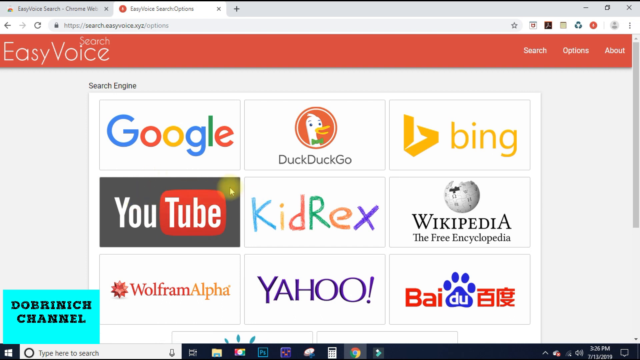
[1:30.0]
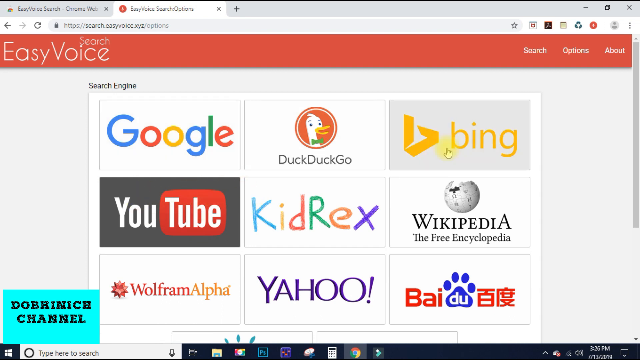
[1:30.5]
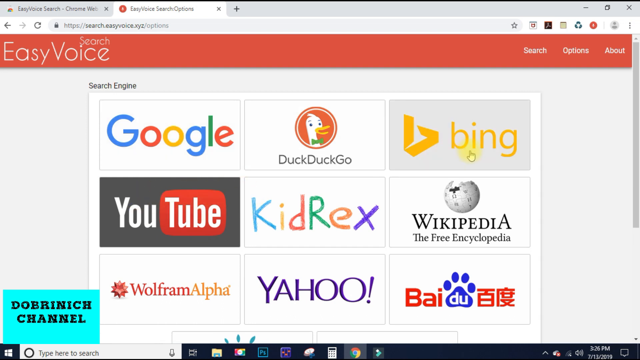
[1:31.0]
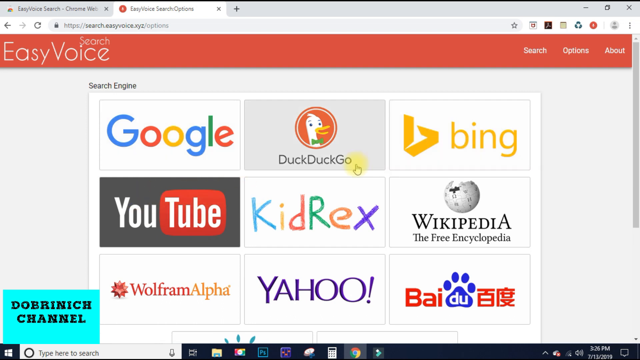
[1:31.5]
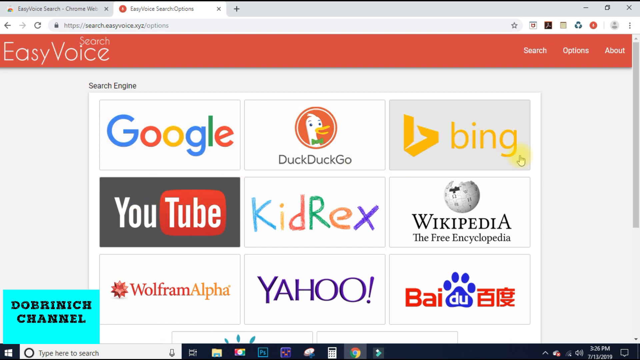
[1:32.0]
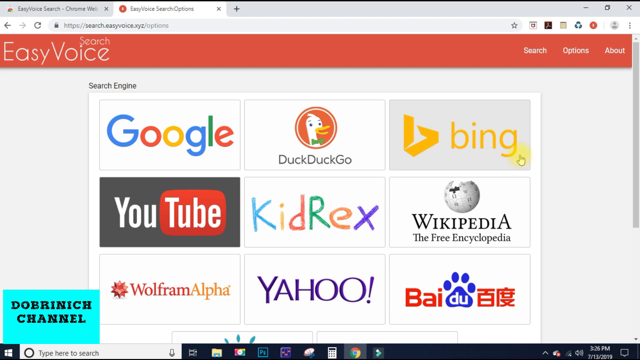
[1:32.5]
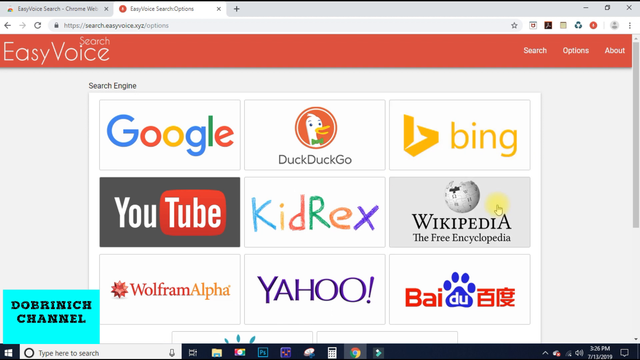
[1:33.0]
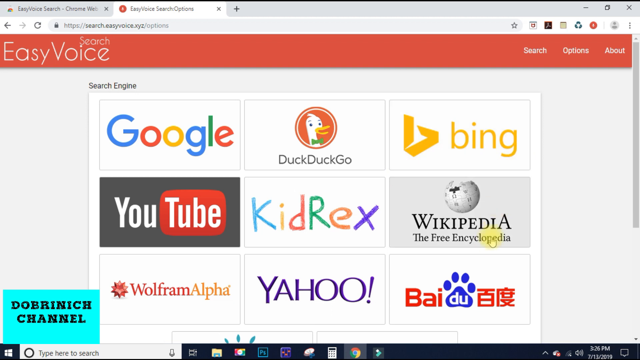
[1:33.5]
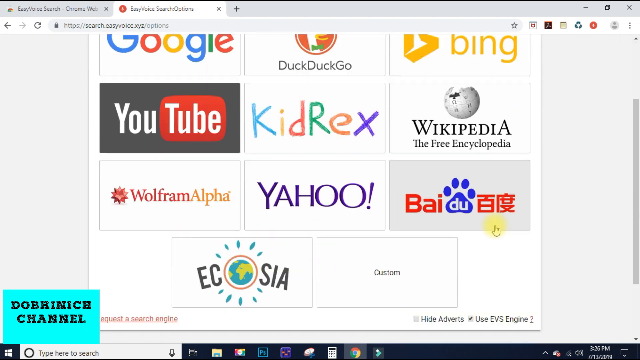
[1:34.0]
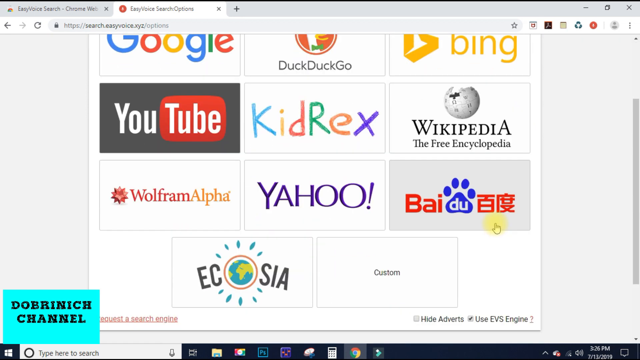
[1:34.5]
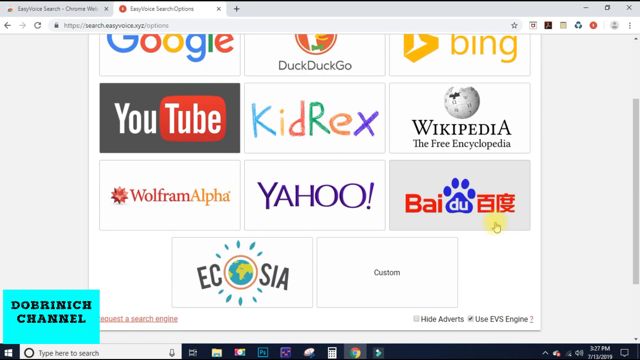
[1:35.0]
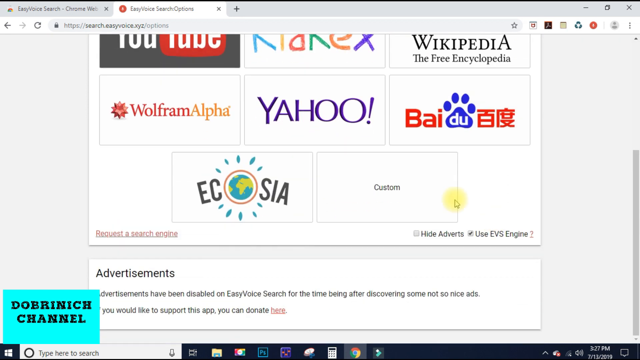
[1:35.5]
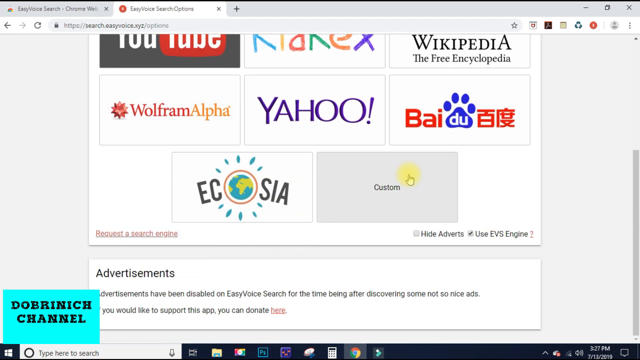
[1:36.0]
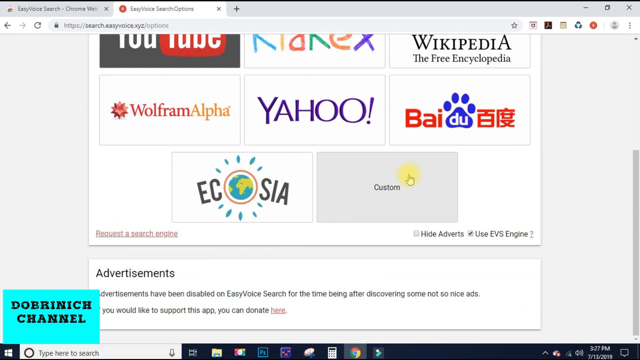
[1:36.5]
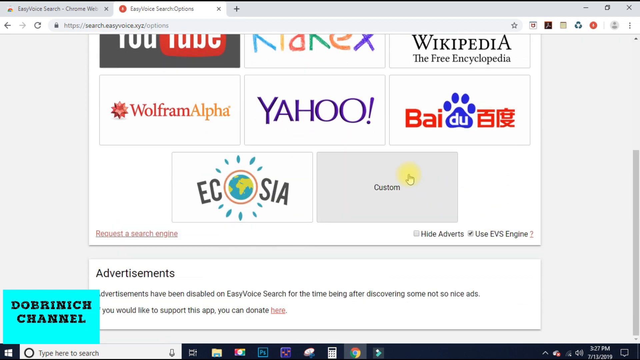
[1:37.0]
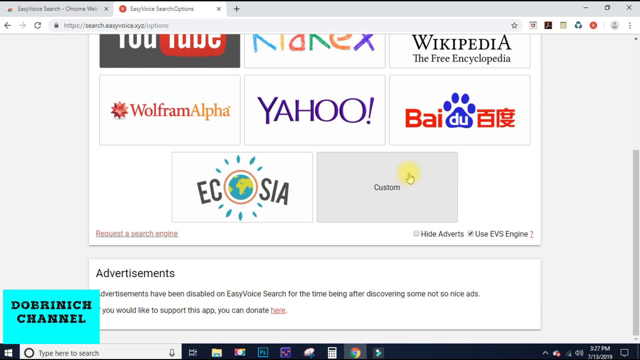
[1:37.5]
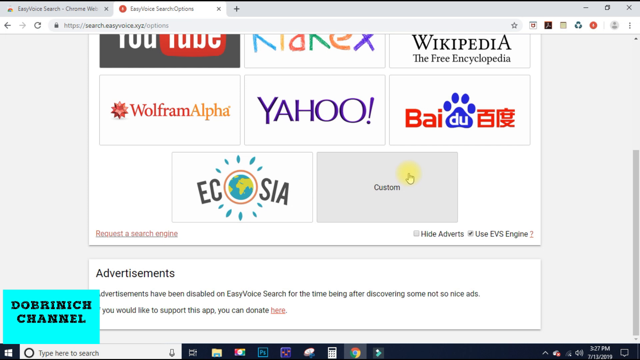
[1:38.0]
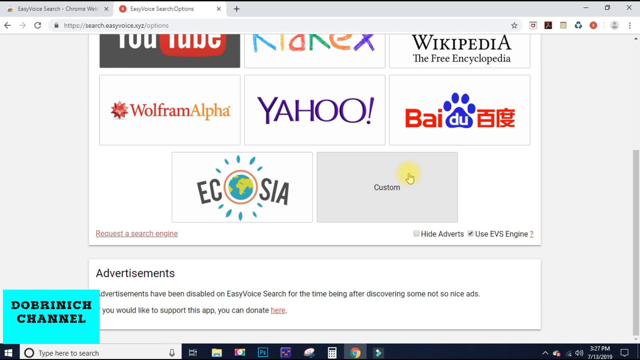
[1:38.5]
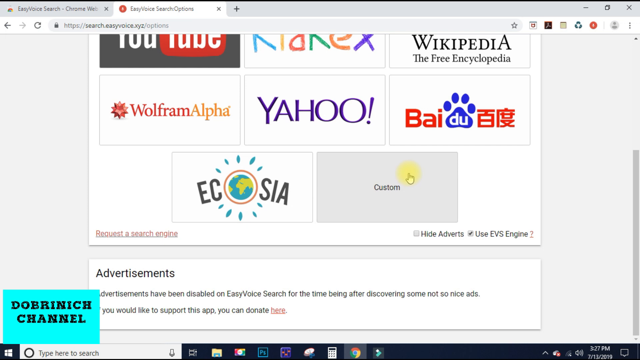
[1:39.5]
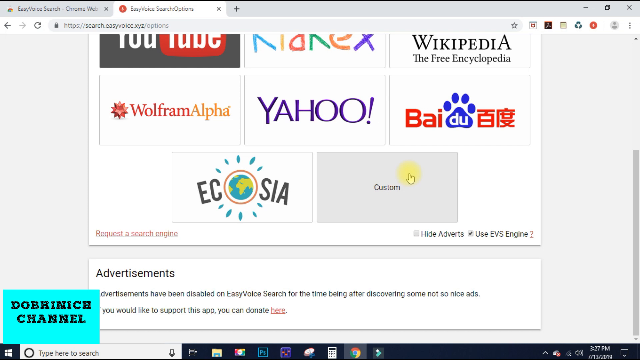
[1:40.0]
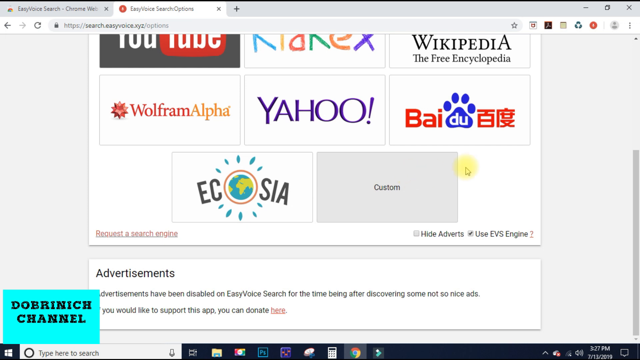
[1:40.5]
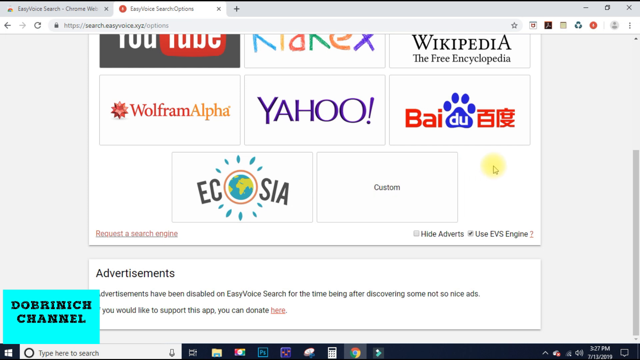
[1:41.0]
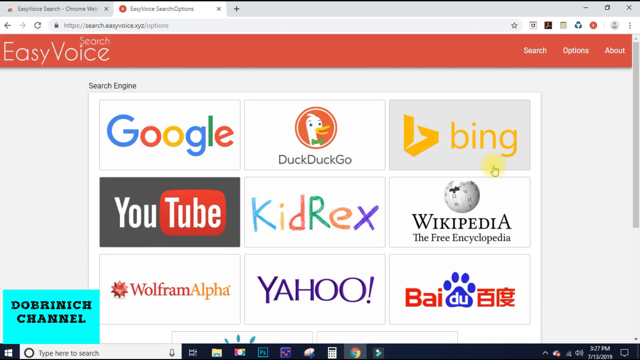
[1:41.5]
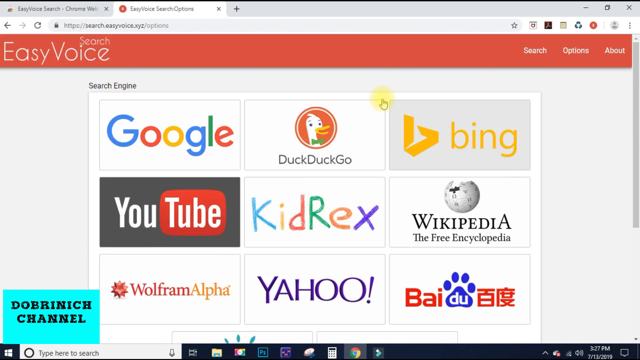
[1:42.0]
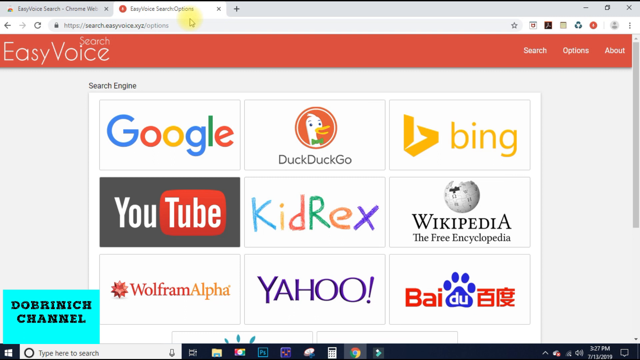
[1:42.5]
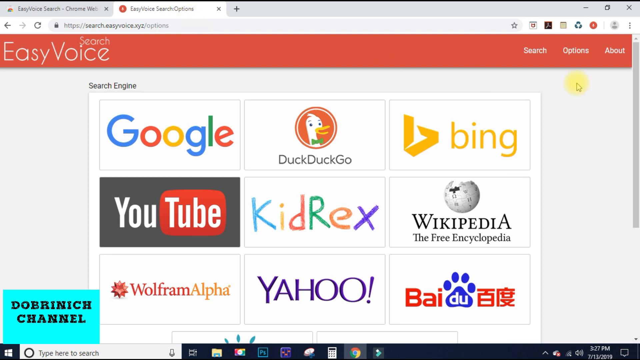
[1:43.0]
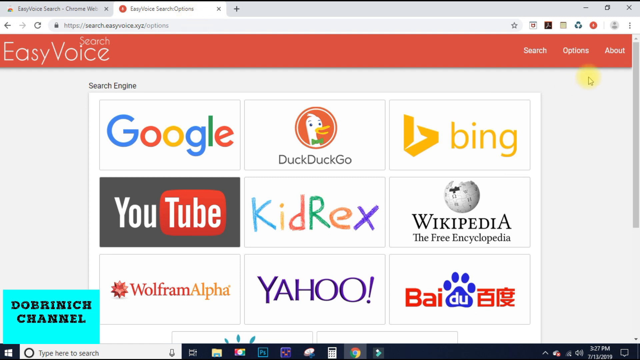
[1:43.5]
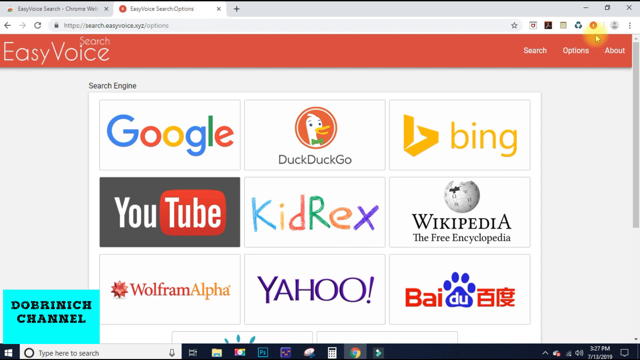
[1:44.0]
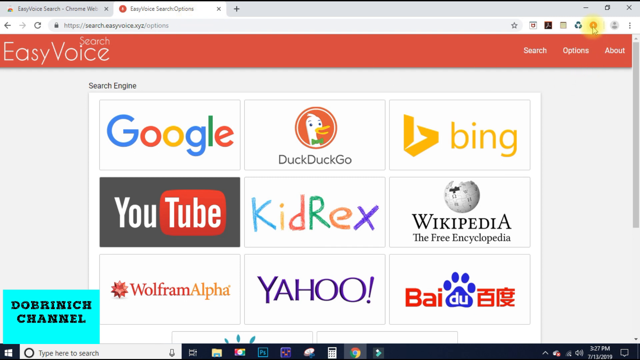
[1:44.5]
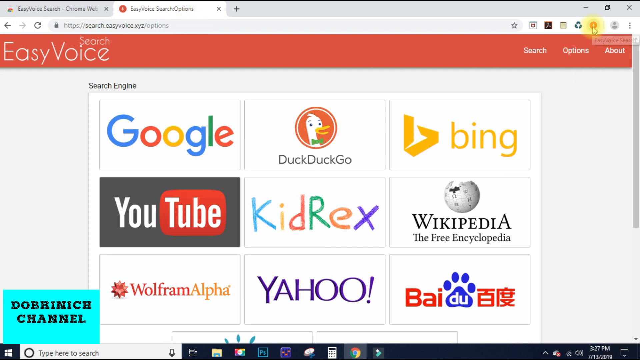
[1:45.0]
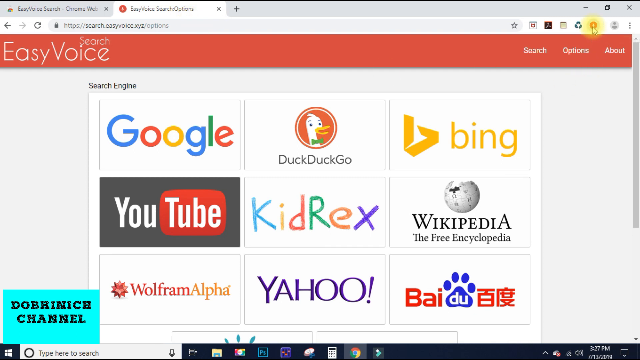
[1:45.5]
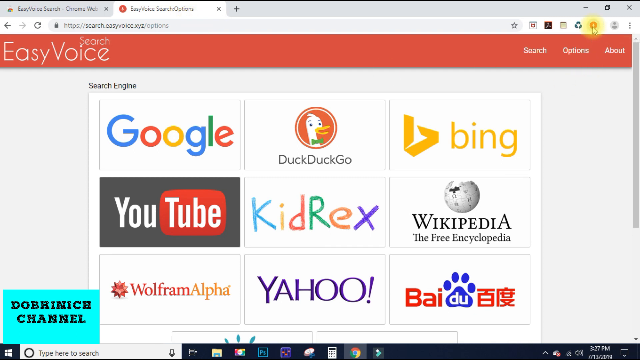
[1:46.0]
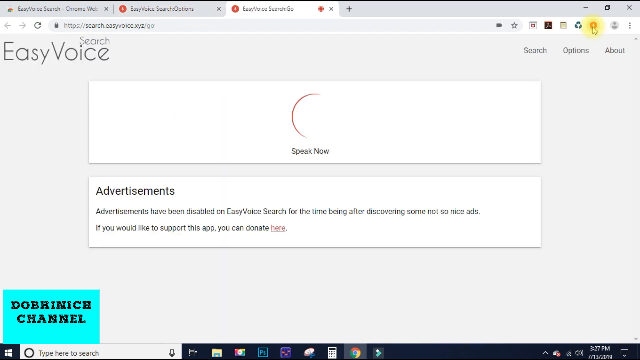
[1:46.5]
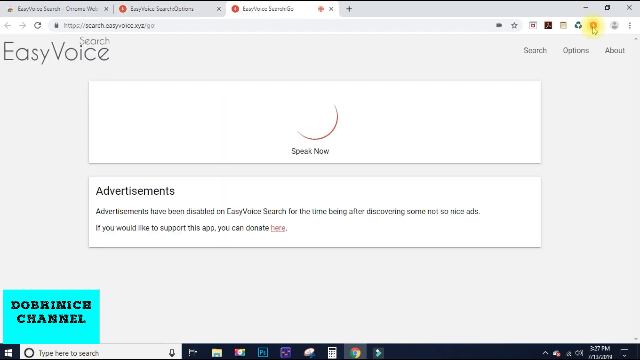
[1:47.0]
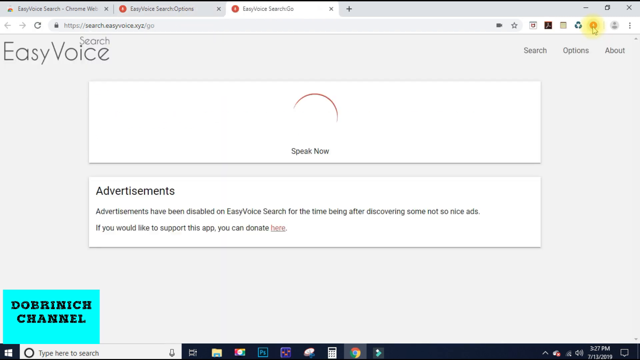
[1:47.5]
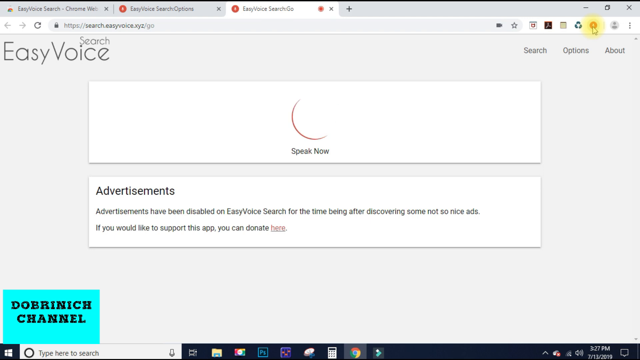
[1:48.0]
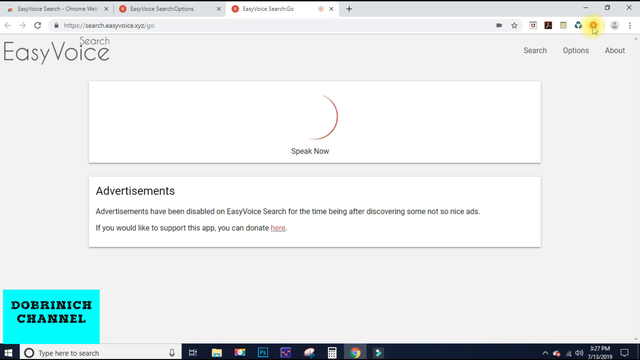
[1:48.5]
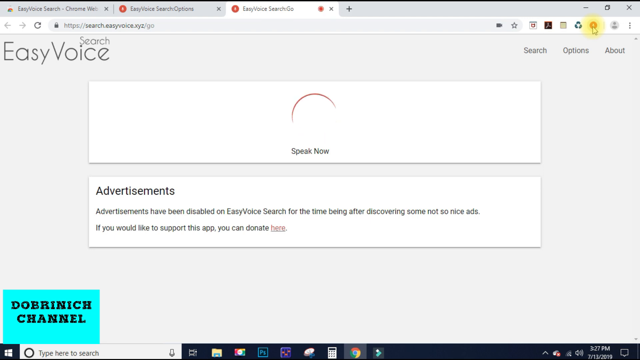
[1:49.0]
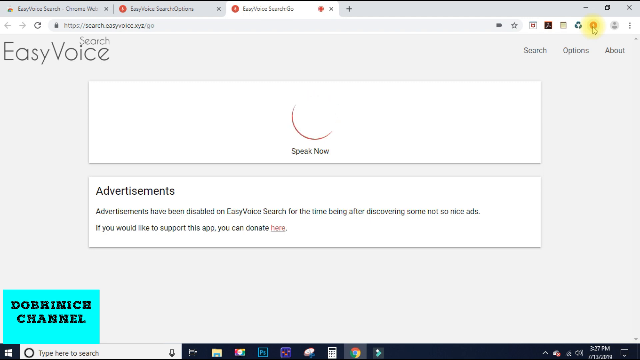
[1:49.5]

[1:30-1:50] The cursor moves between Bing and DuckDuckGo and then down to Wikipedia before the page is scrolled down, showing more options: Ecosia and Custom. They hover over Custom for some time, and at the bottom of the screen it says "Advertisements" and "Advertisements have been disabled on Easy Voice Search for the time being after discovering some not so nice ads. If you would like to support this app you can donate here." They scroll back to the top, where a red banner says "Search Easy Voice", with three options on the right: Search, Options and About. In the browser bar above, the Easy Voice Search logo has been added and pinned. The person clicks it, which brings up a new, blank site with a white text box that says "Speak Now" and a red circle moving clockwise.